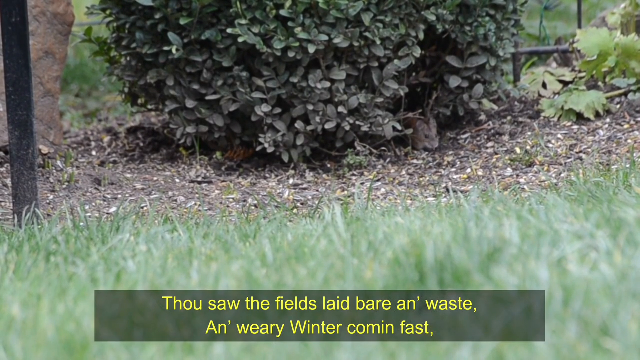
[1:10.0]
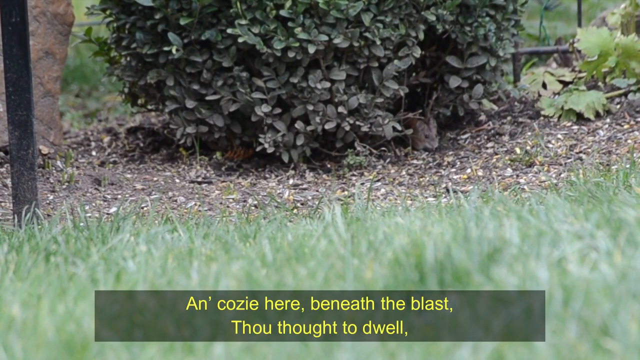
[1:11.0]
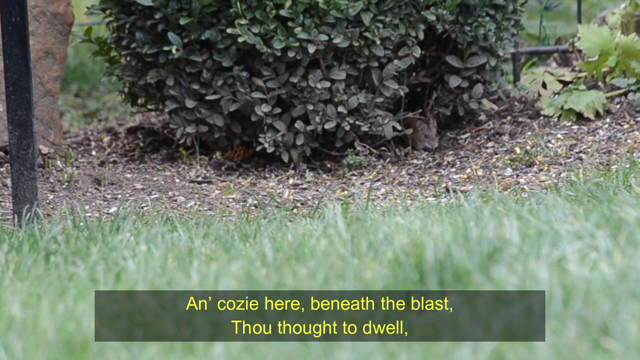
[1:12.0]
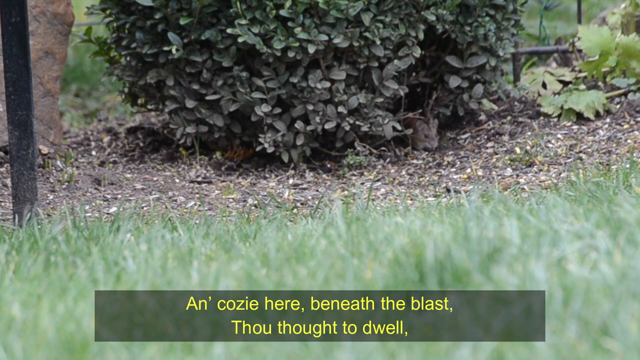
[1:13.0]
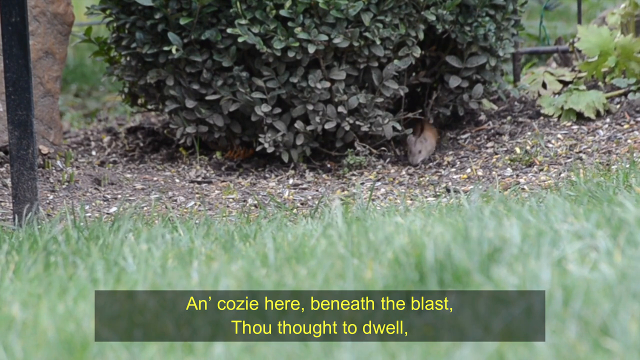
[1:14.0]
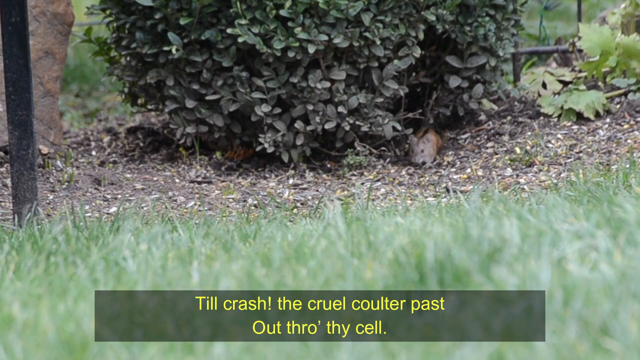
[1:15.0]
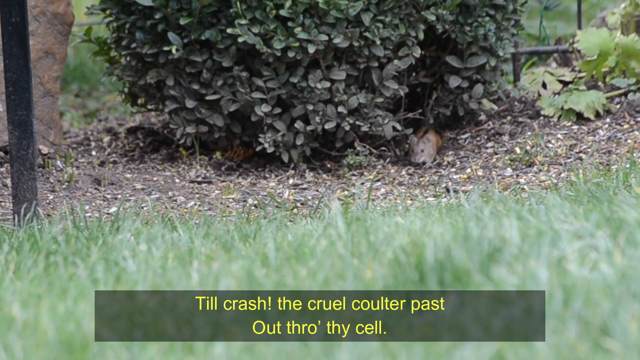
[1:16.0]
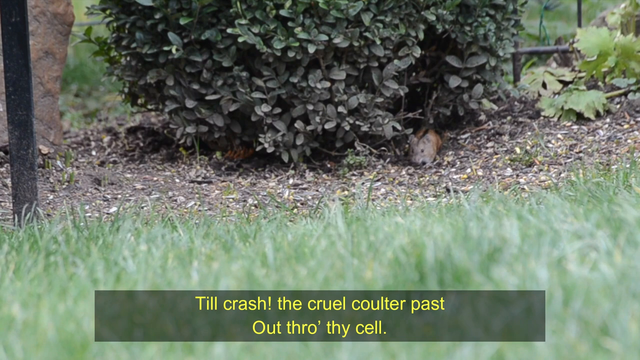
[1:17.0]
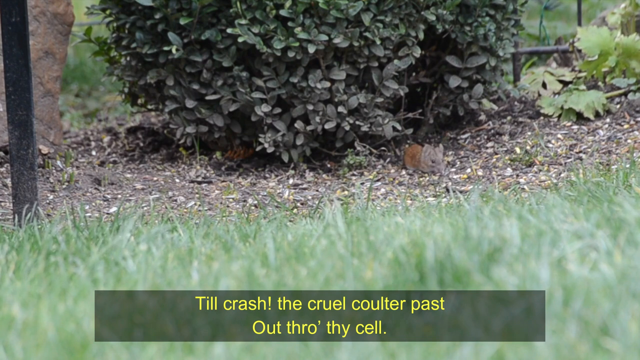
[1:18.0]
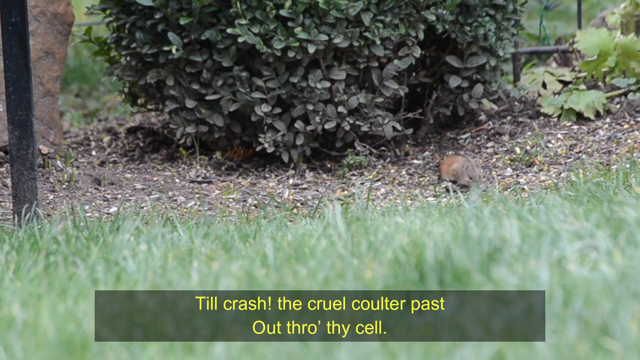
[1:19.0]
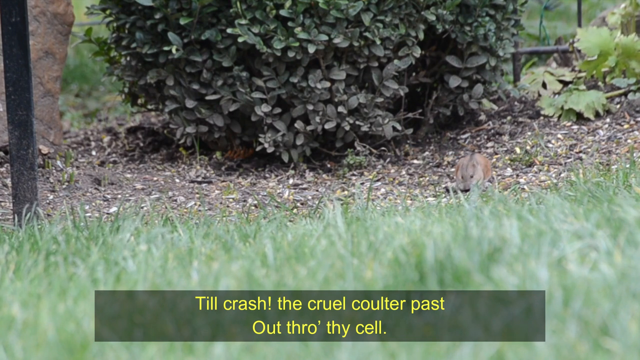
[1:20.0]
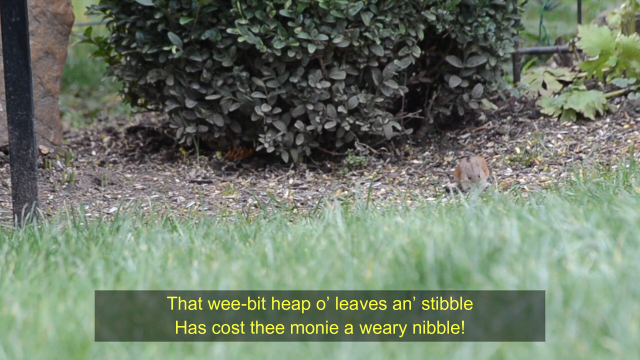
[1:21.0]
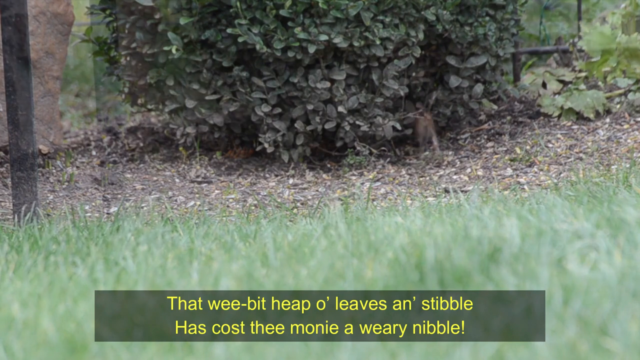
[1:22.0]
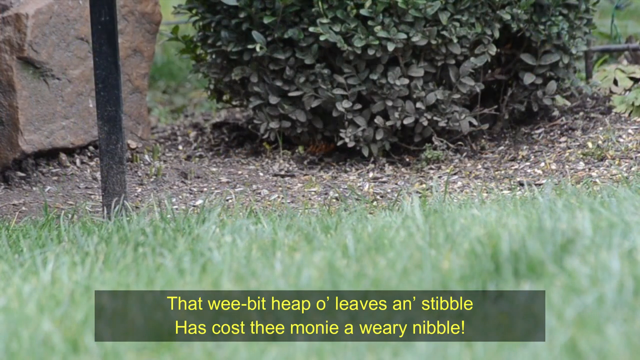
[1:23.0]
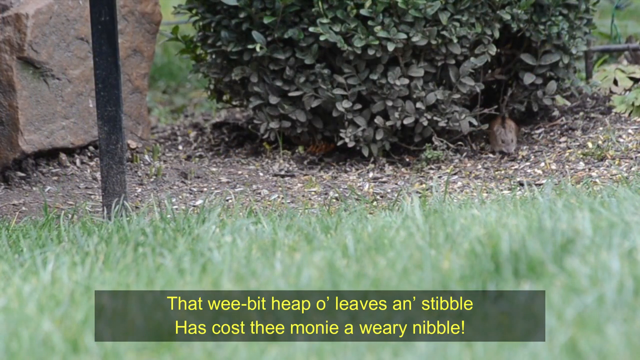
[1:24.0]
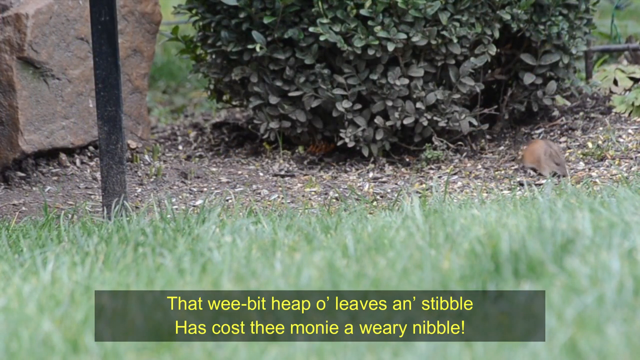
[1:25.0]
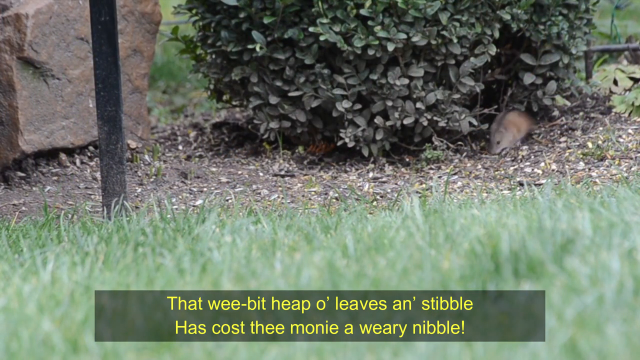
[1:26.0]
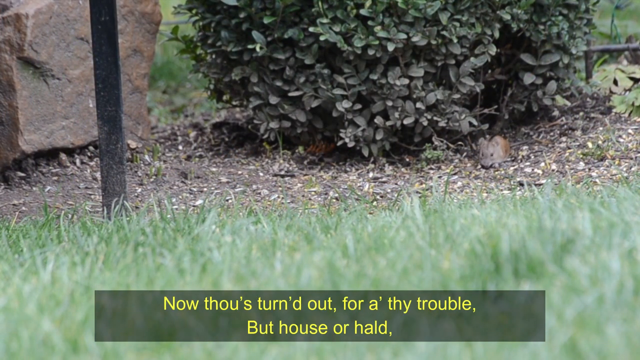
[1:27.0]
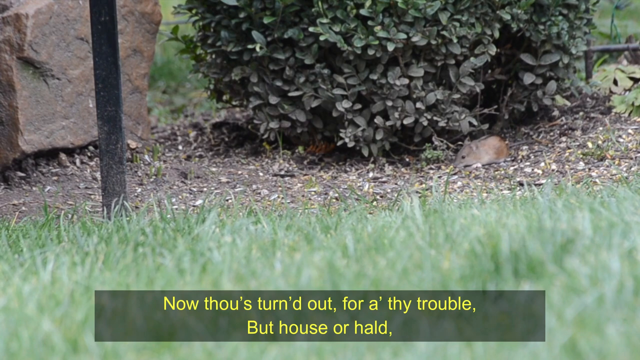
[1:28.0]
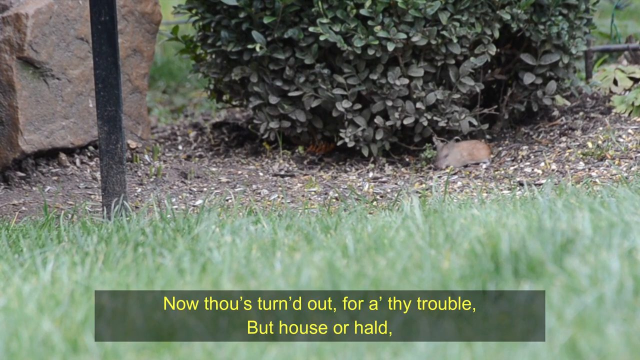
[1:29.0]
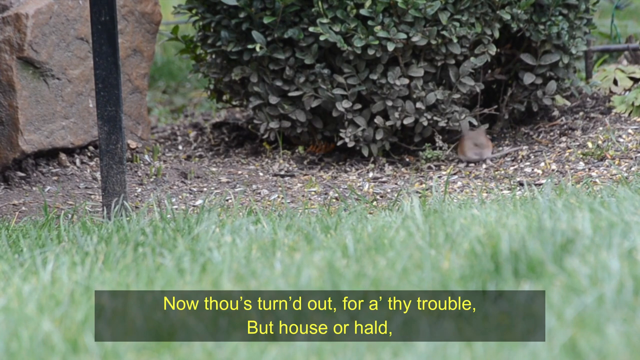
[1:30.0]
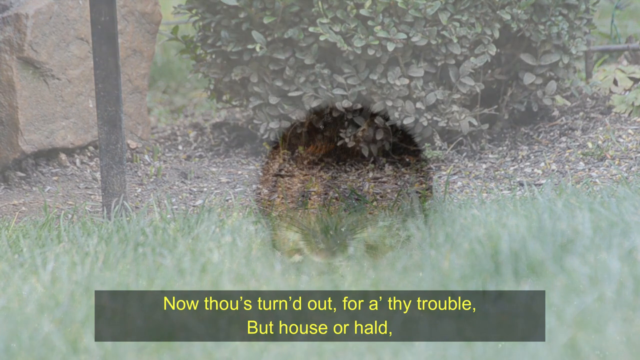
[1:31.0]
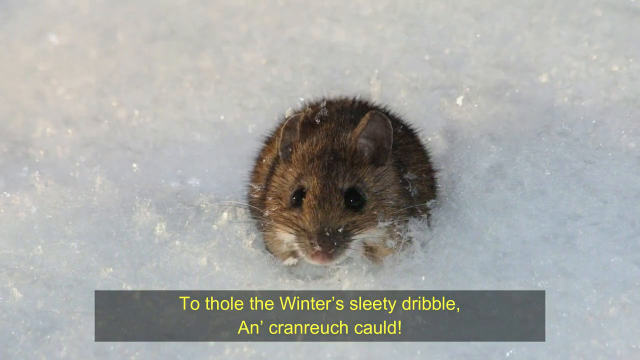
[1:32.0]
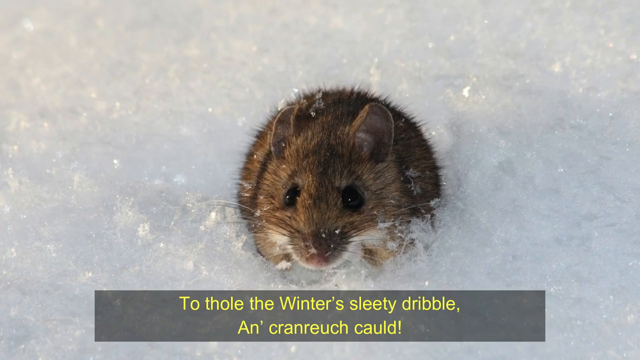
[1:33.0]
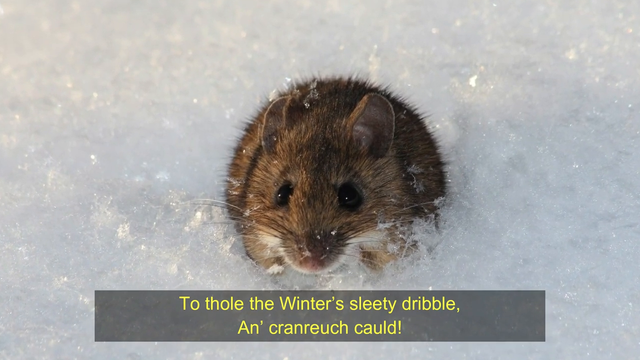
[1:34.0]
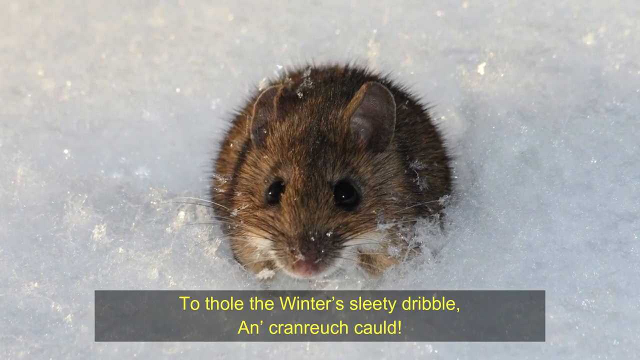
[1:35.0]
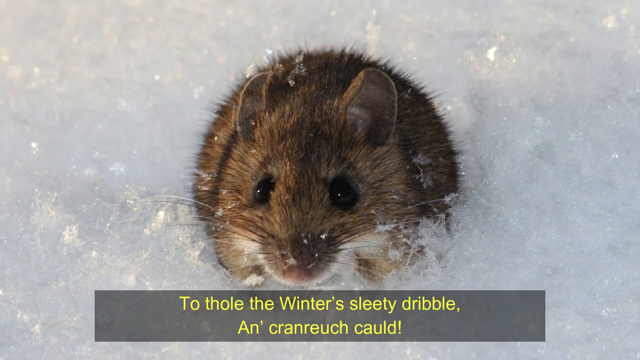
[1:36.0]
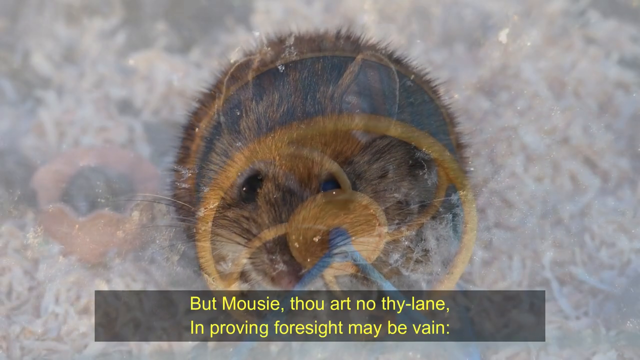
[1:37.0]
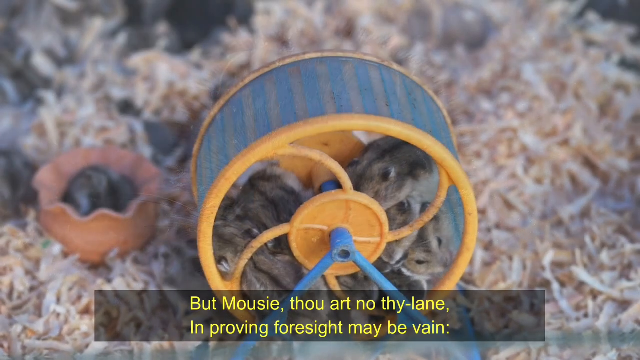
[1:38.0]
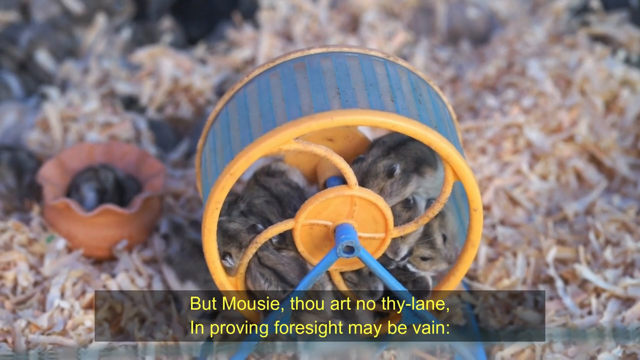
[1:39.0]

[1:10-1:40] A field mouse pops out from underneath a little bush, with grass in the foreground. The text at the bottom reads "and cozie here beneath the blast thou thought to dwell." The wind is blowing, rustling the blades of grass, the leaves and the bushes, as the mouse slowly comes out to explore. The words change to "'Til crash, the cruel, coulter past, outthro' thy cell." The mouse comes out further, digs around and finds something to nibble on, as the text reads "that wee bit heap o' leaves an stibble has cost thee money a weary nibble." The mouse turns and darts back into the bushes, comes out, darts back in and comes out again, looking around, while the words change to "now thou's turned out for a thy trouble." It finds something else, scurries around and goes back into the bush. The image then changes to a close-up of a little brown field mouse sitting in what looks like snow, with snowflakes stuck to the fur on top of it and on its nose and whiskers. The text reads "To thaw the winter's sleety dribble and cranreuch cauled" and then "but mousy thou art no thy lane in proving foresight may be vain." The video switches to an image of sawdust with something like a hamster wheel right in front that looks full of baby mice crammed inside. A bunch of little baby mice are also all over the sawdust in the background, digging around, and some are sitting in something like a food dish.